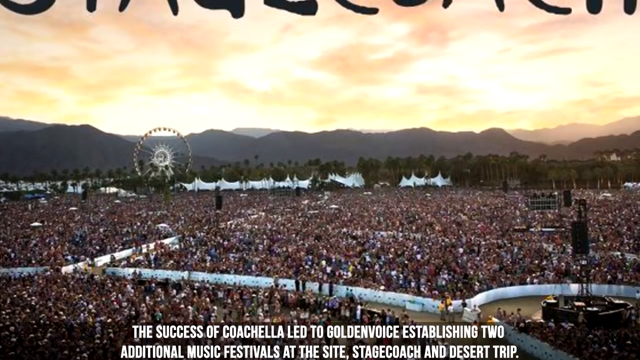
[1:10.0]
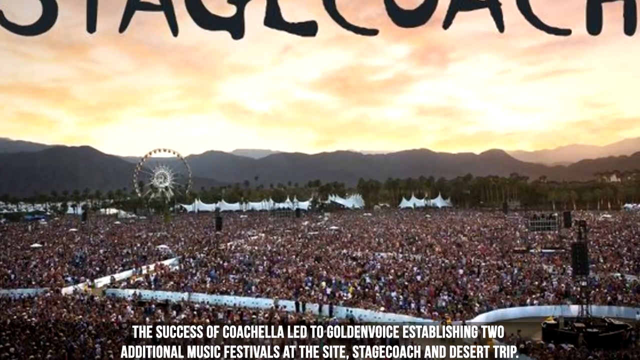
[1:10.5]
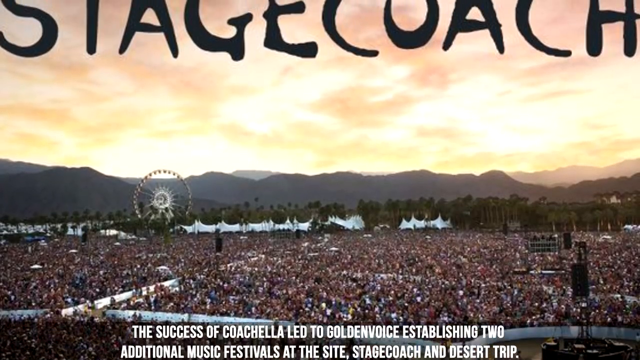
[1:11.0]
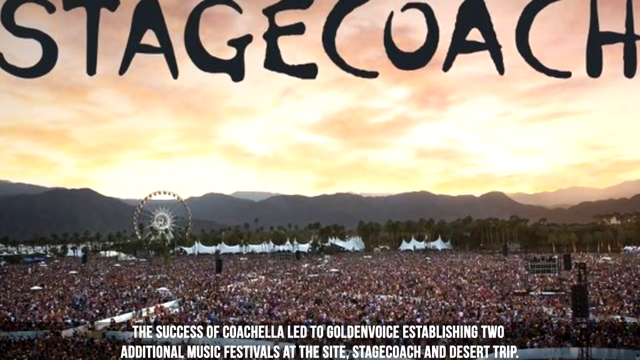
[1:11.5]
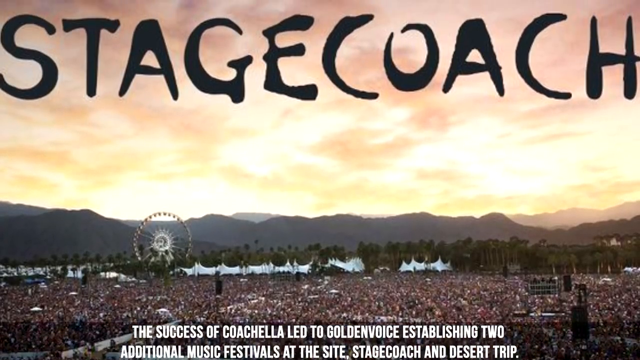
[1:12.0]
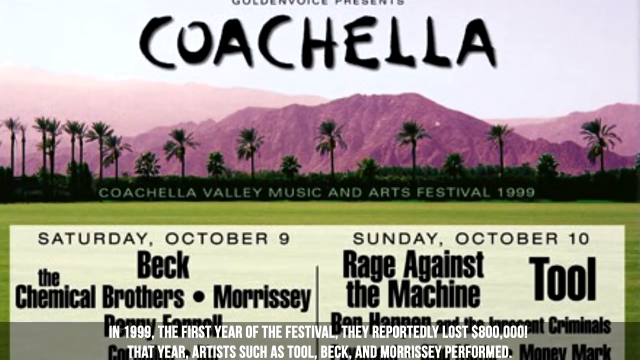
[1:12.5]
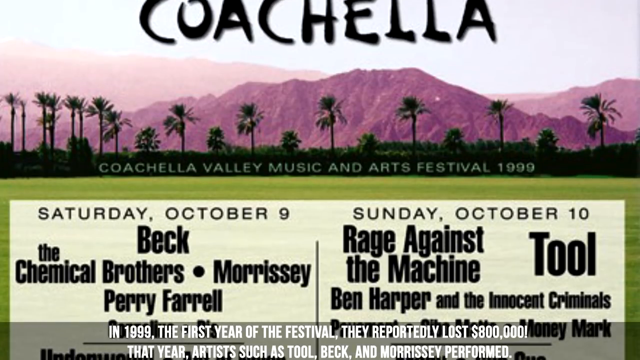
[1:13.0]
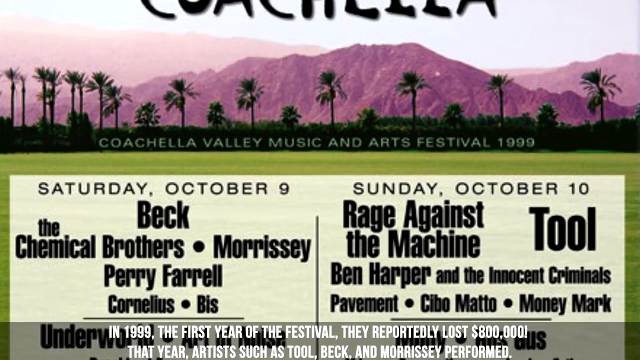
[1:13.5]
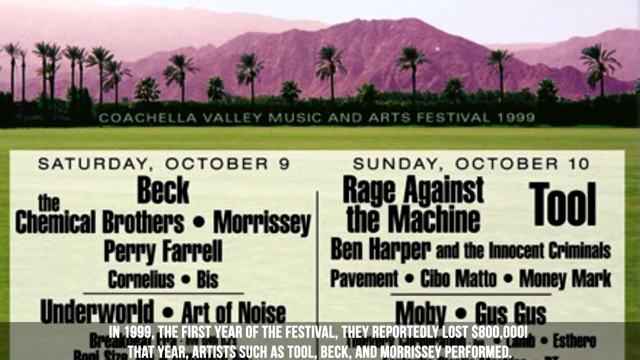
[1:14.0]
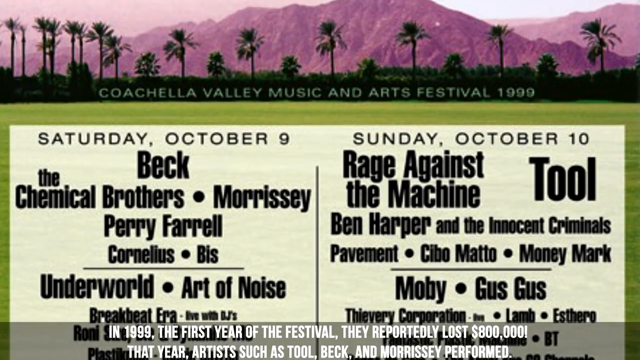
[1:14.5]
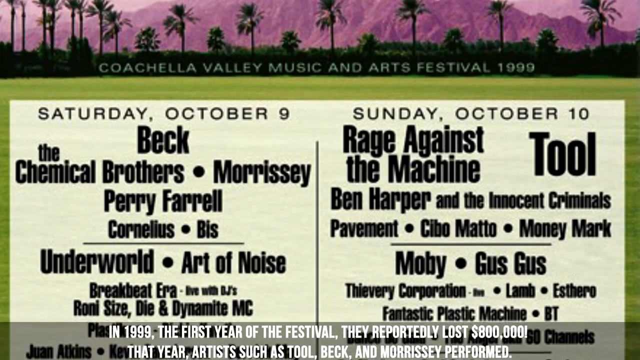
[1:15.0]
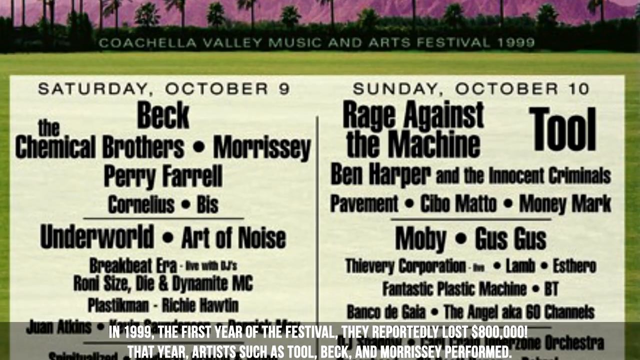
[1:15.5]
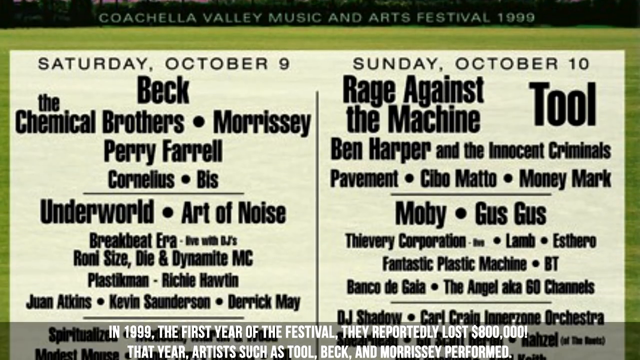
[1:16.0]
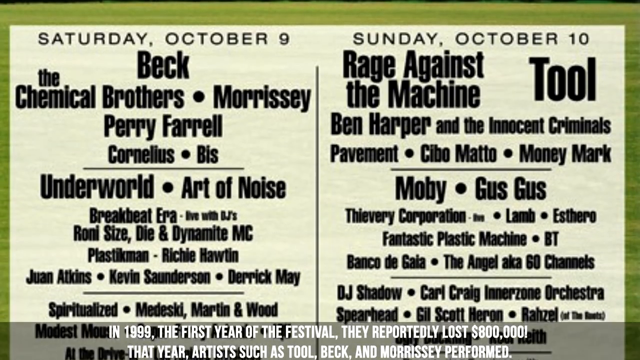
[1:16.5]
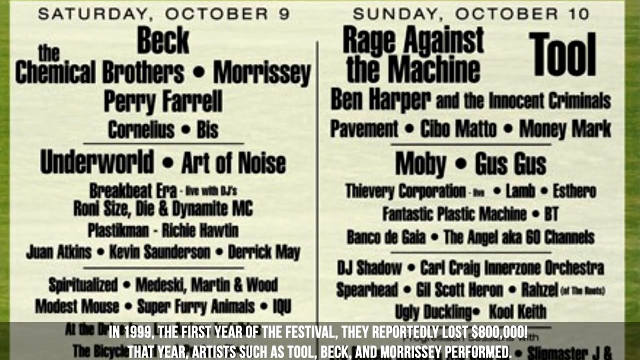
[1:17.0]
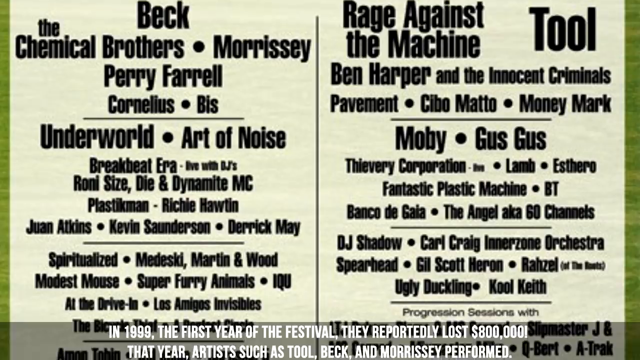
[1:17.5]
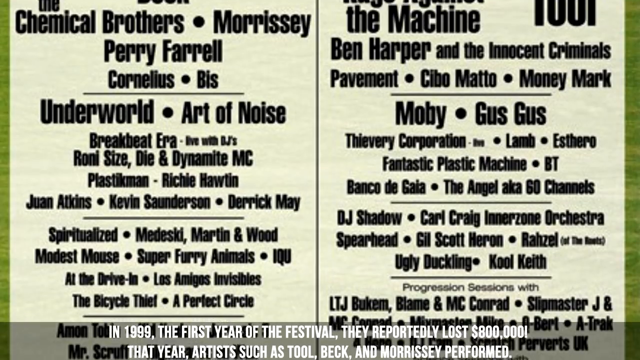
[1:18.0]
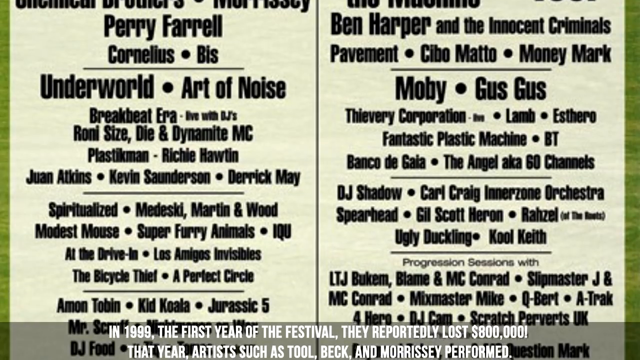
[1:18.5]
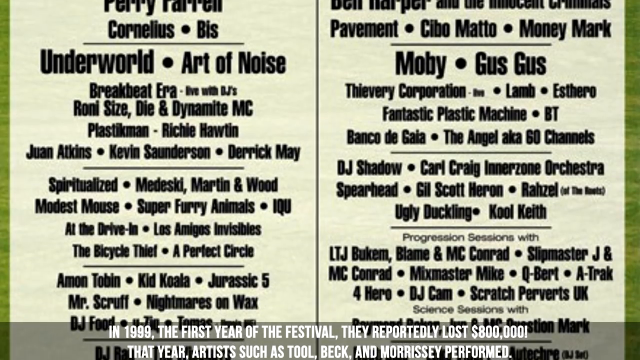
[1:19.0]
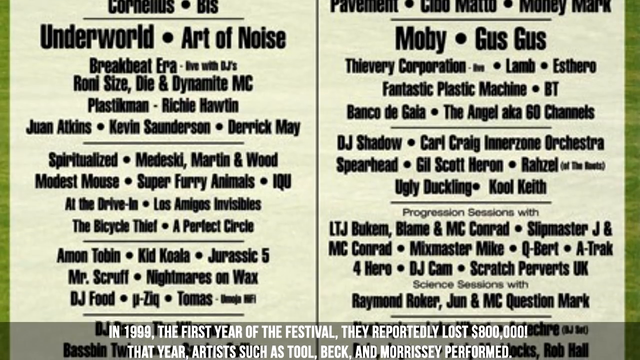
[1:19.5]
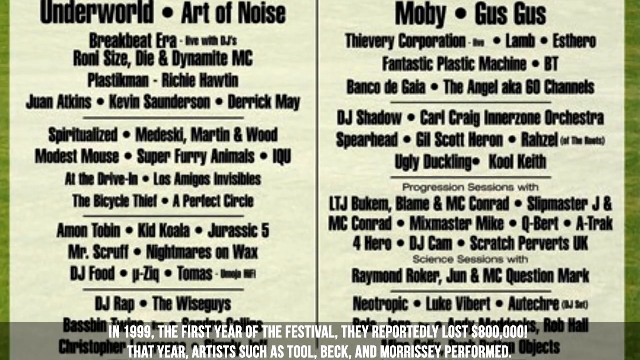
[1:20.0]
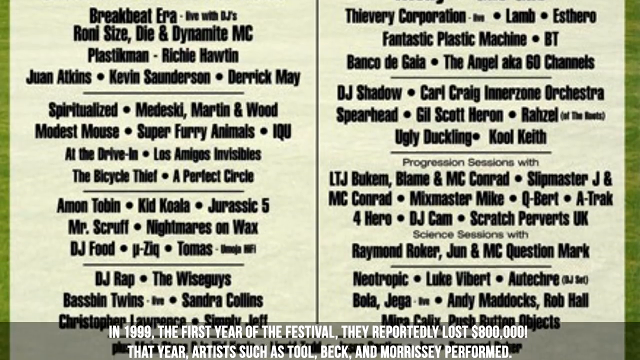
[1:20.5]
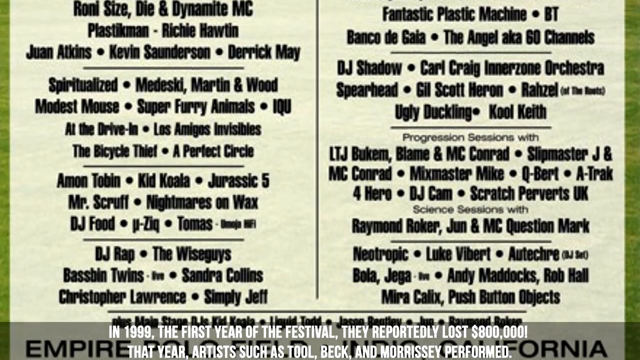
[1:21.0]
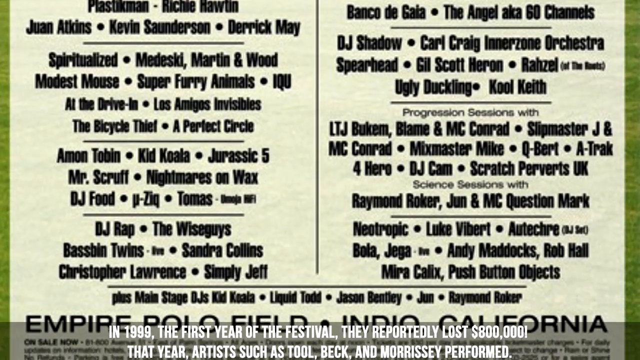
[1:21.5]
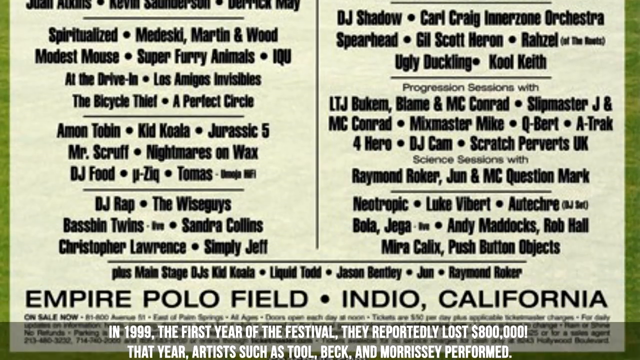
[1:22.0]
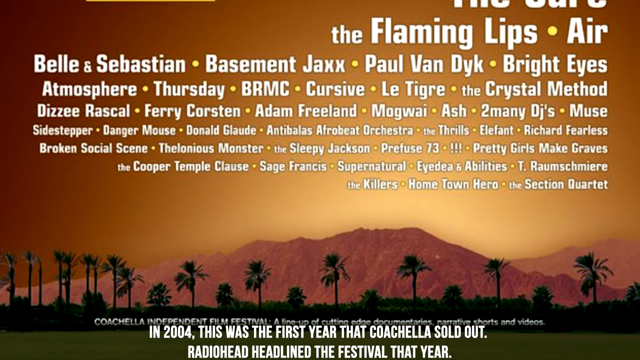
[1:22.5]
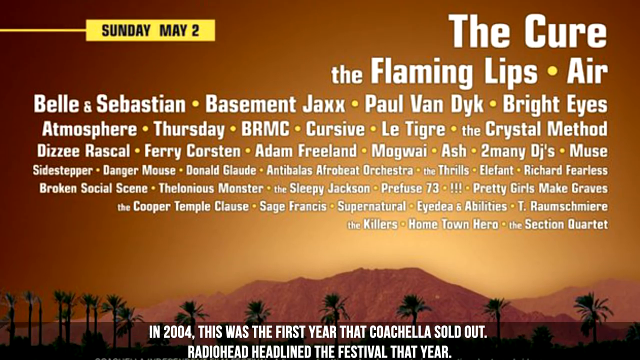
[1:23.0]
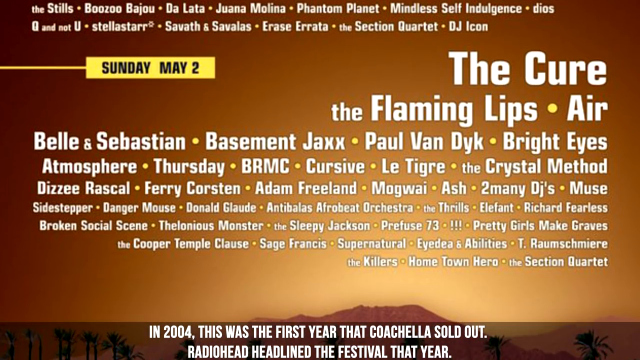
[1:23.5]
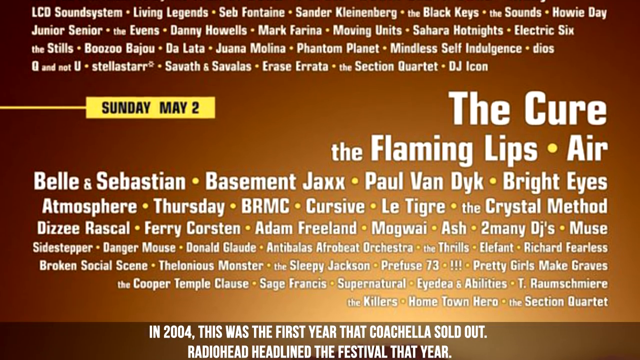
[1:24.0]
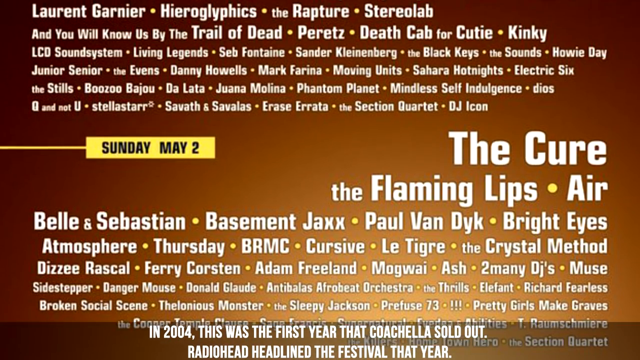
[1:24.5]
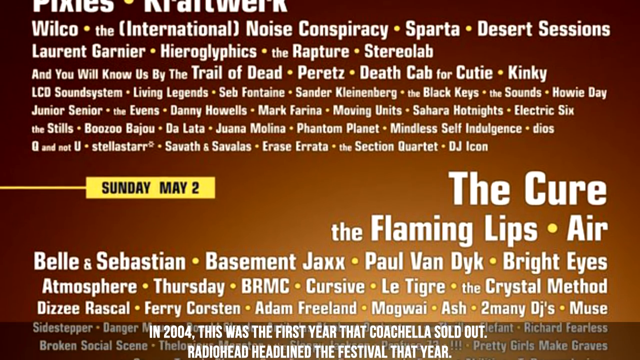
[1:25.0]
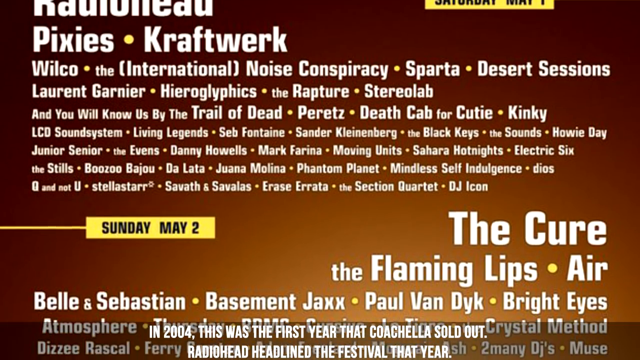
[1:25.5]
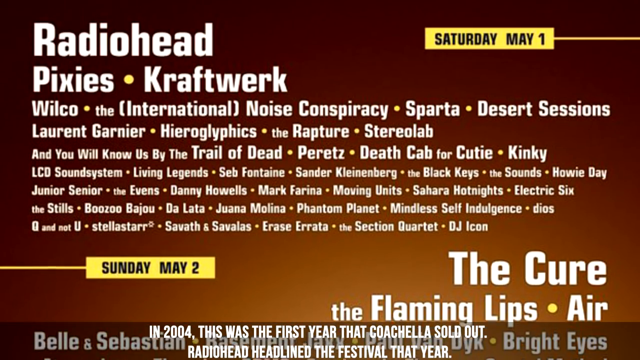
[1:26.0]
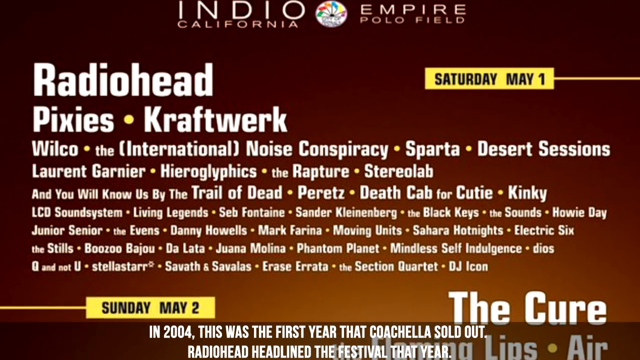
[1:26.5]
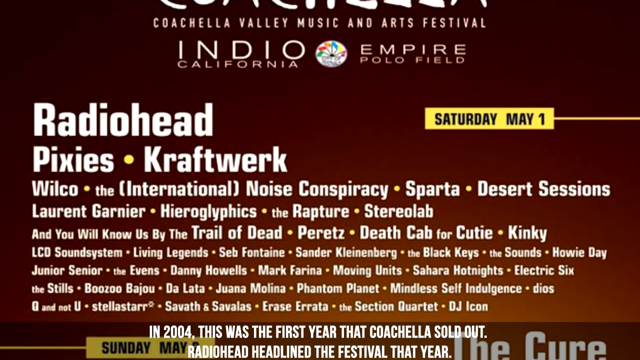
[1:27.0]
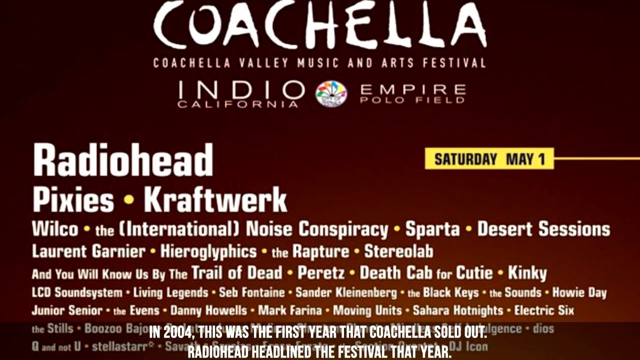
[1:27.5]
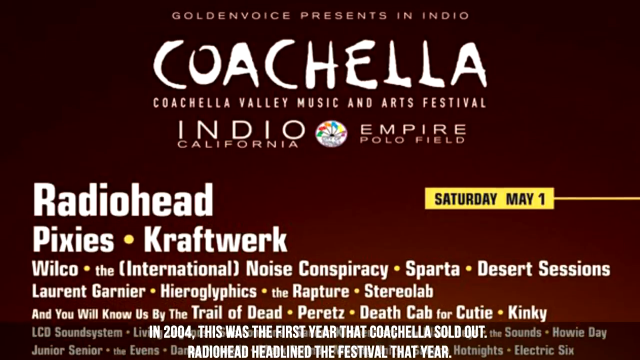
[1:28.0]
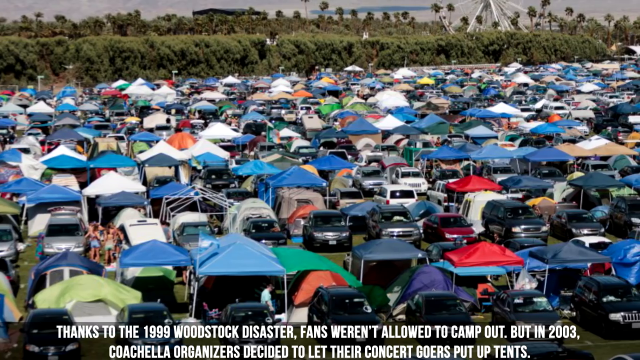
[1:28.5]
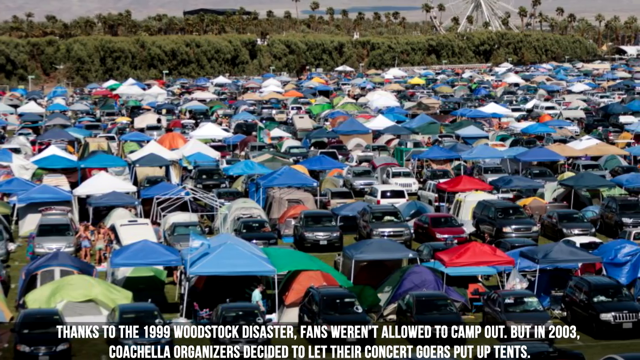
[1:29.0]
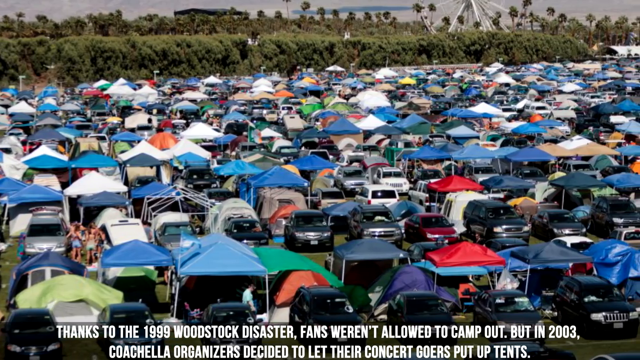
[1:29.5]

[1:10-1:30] A still image shows a massive group of people at a music festival, thousands, possibly hundreds of thousands, piled together with no individuals distinguishable. In the far distance are a ferris wheel, some trees and what look like the tops of mountains or hills. The camera moves up the image from bottom to top, and black capital text at the top reads "Stagecoach". Next is a still image of what looks like a poster. At the top, black capital text reads "Coachella"; below it is a graphically designed cartoon image of green trees with sort of purple mountains behind them. Text under that reads "Coachella Valley Music and Arts Festival 1999". Moving down, two dates appear: "Saturday October 9th" on the left and "Sunday October 10th" on the right. A list of bands follows, each side designed differently, some band names bigger than others and some in the lettering used on their records, including Beck, The Chemical Brothers, Morrissey, Road Against The Machine, Pavement and Moby. The names become smaller further down the poster, with the headliners at the top and the rest of the bill toward the bottom. The camera keeps moving down past more bands. A cut leads to another still image, this time moving from the bottom up, with text at the very bottom of the video reading "in 2004 this was the first year that Coachella sold out". Tiny band names at the bottom get bigger moving up, until The Cure appears at the top of the first section, with "Sunday, May the 2nd" to its left in black text in a yellow rectangle. Moving up again, the band names grow from small to large until Radiohead at the top, with "Saturday, May the 1st" to its right in black capital text in a yellow rectangle. At the very top the image reads "Coachella, Coachella Valley Music and Arts Festival, Indio, California, Empire Polo Field". A cut leads to an image of what looks like a car park with lots of parked cars and also the tops of what look like tents; tarpaulins and tent materials in different colours, blues and greens, fill the space, with the greens of trees in the very background.